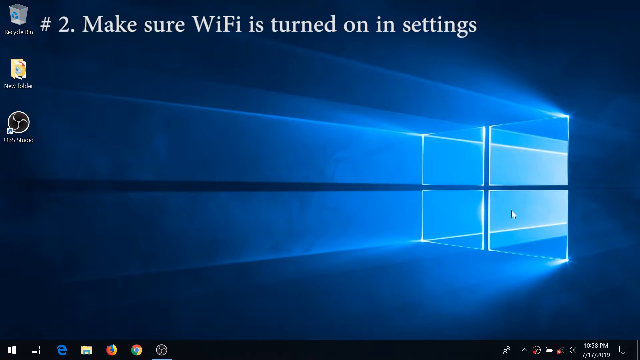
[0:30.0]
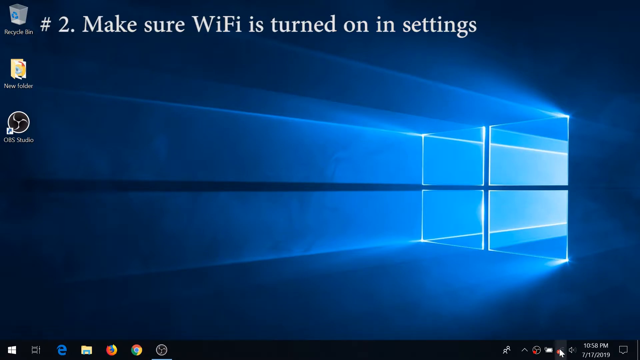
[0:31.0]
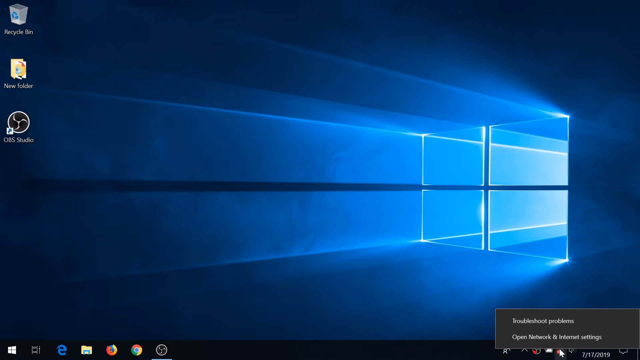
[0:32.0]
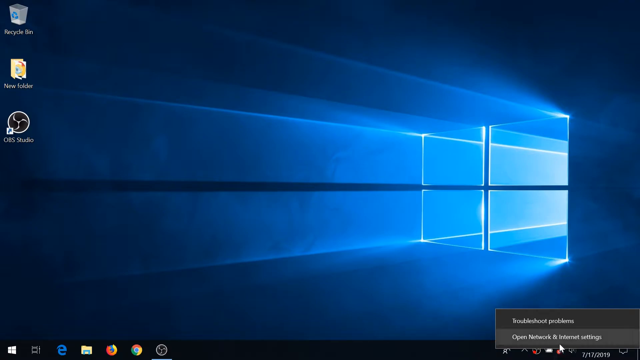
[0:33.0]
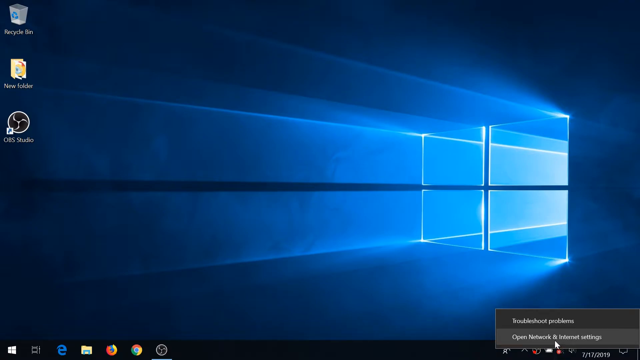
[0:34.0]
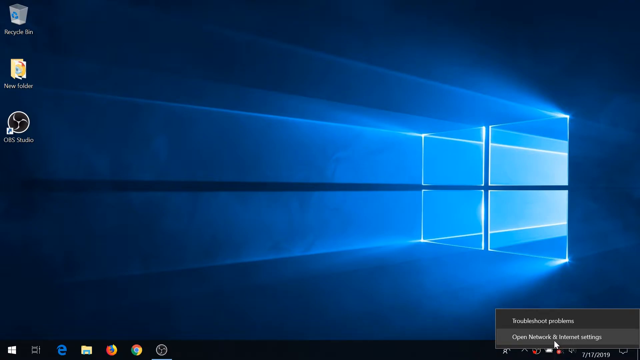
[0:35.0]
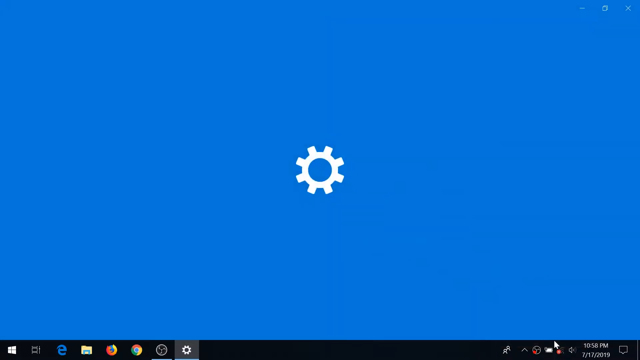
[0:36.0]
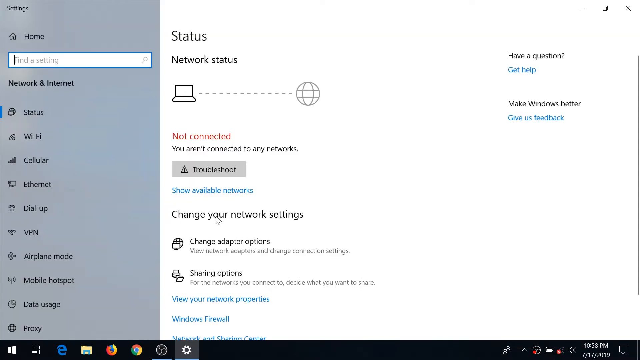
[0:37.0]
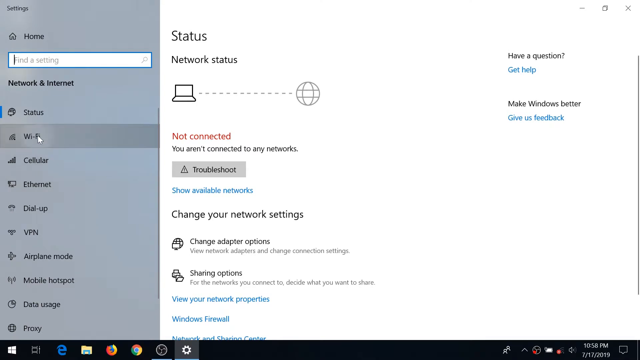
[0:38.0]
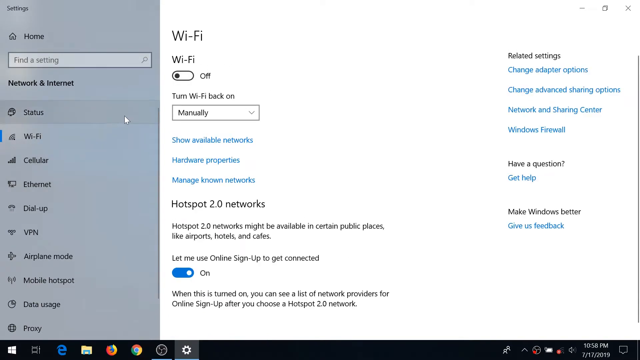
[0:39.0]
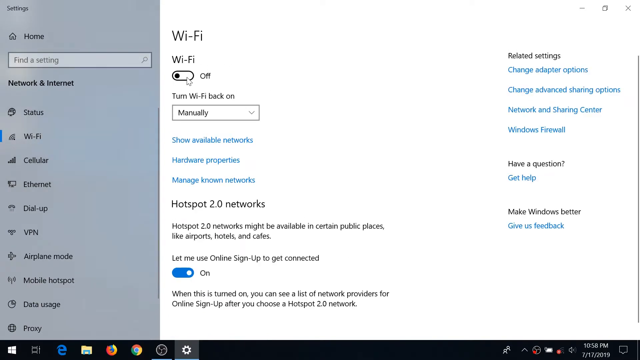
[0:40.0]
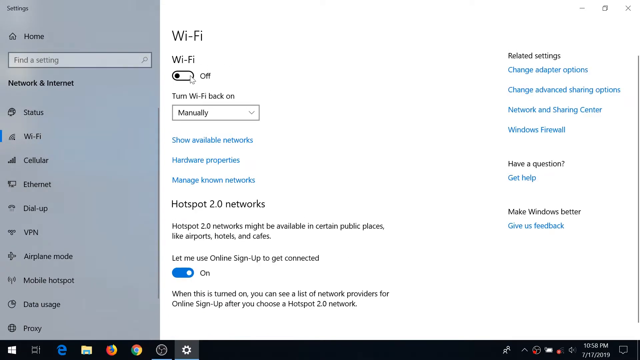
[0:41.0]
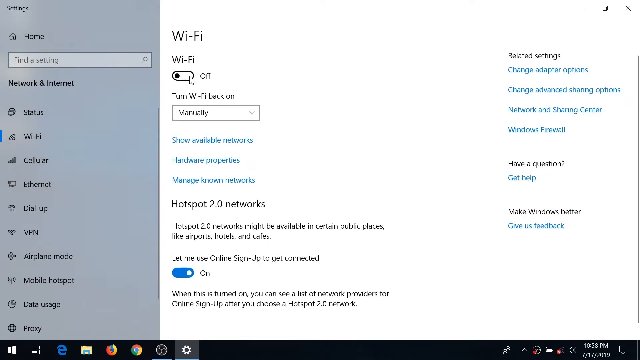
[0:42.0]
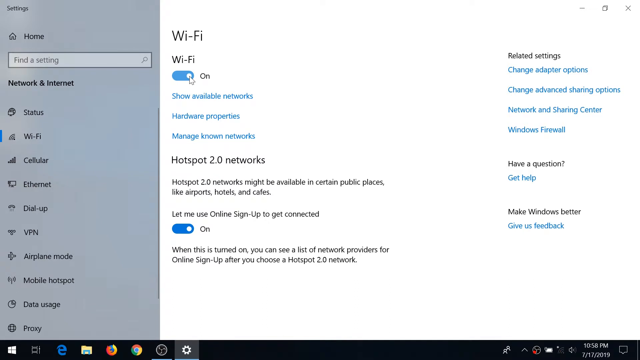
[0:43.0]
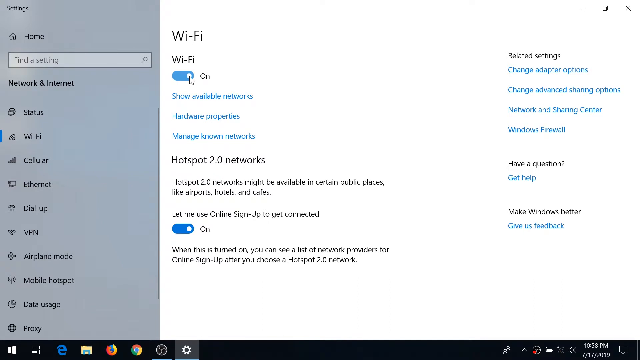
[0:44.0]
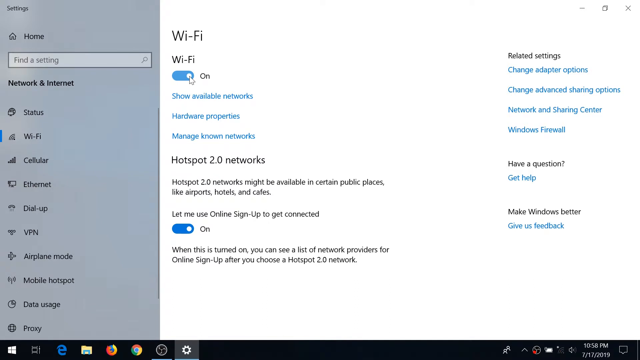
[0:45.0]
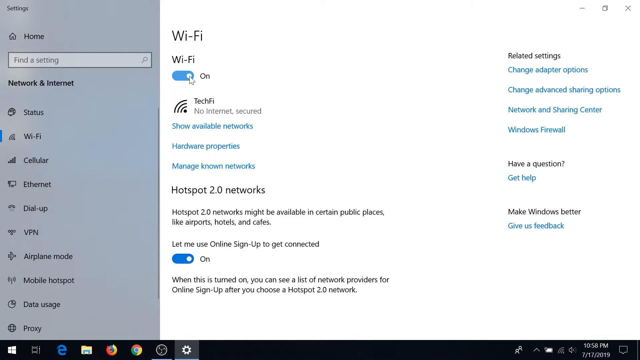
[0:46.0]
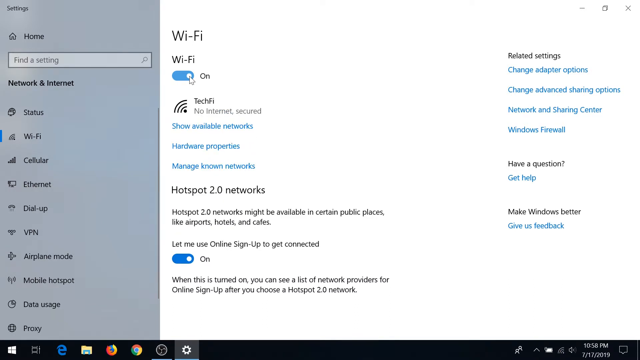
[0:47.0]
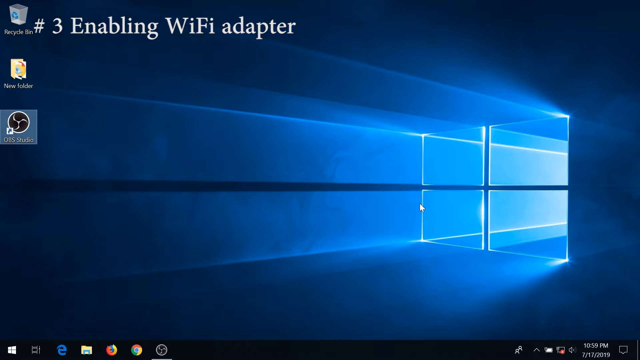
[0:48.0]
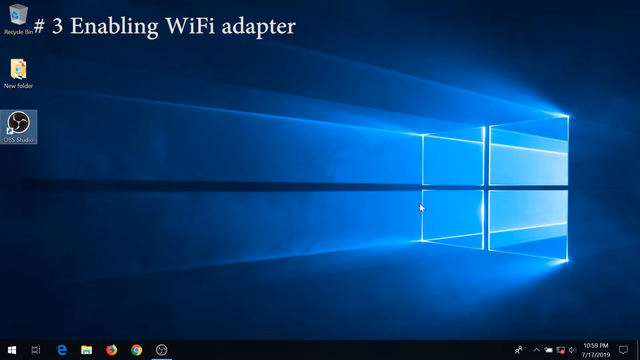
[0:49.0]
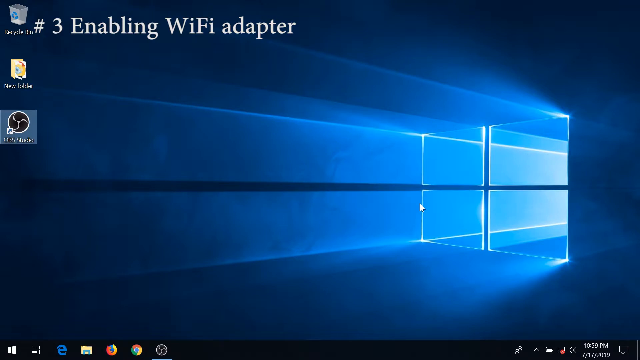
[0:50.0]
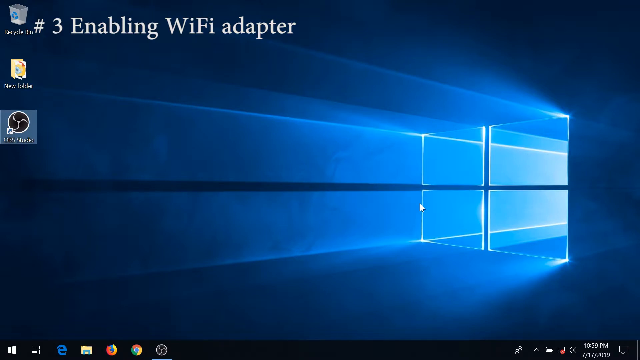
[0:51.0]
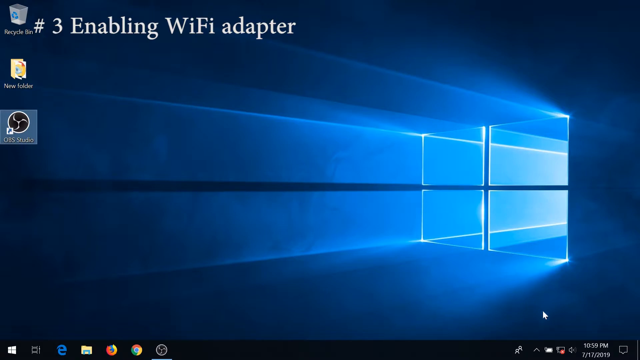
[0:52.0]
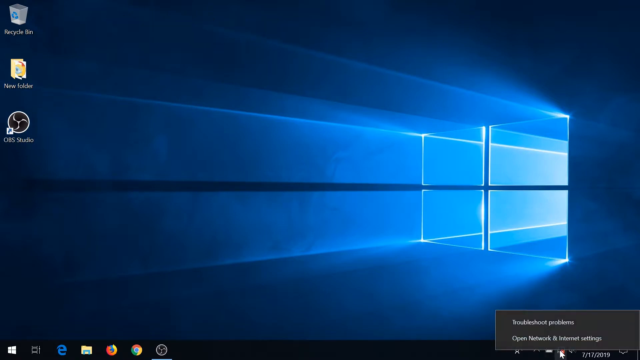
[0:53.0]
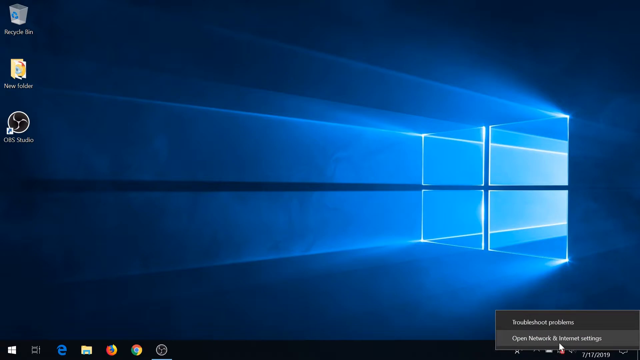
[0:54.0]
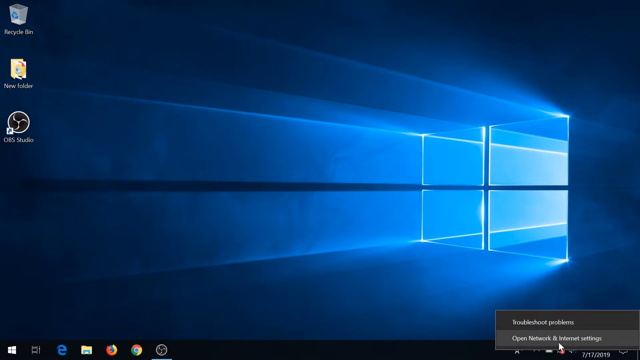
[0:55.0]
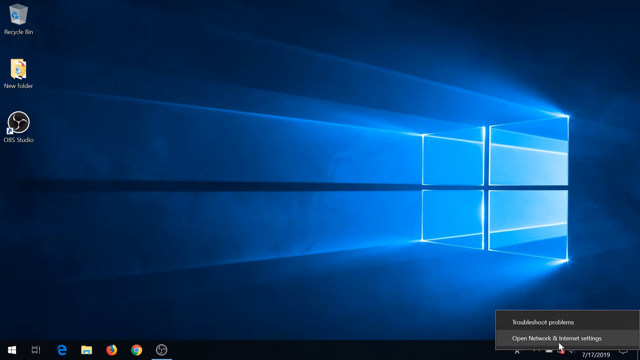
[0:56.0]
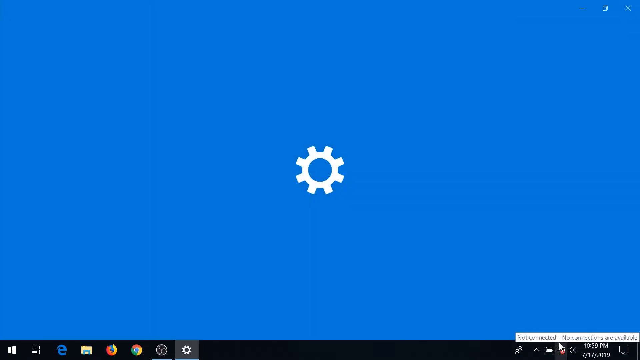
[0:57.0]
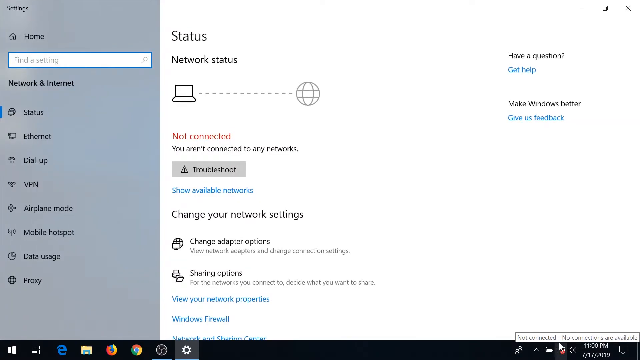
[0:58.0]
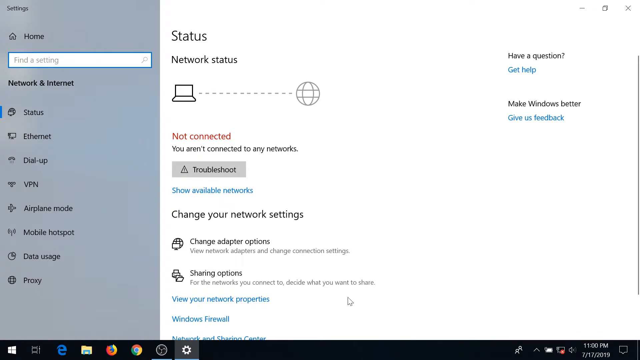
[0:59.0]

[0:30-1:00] The view returns to the same desktop, this time with a line of text across the top reading "Number two make sure Wi-Fi is turned on in settings". A notification box with troubleshooting options comes up on the lower right side of the screen. The screen changes to show a settings cog, and the Settings screen appears. A menu on the left lists Home, Network Settings, Status, WiFi, Cellular, Ethernet, Dial-up and VPN, while the other half of the screen shows the network status, indicating that the WiFi is not connected. The user clicks on Wi-Fi and the screen changes to show the Wi-Fi options. They turn the Wi-Fi on, and the menu options change to show the Wi-Fi. The video moves back to the desktop, where a line of text along the top says "Number three enabling wi-fi adapter". The user moves down to the settings at the bottom right and clicks to open network settings. The view then returns to the Status page within Settings, where they click "change adapter settings".